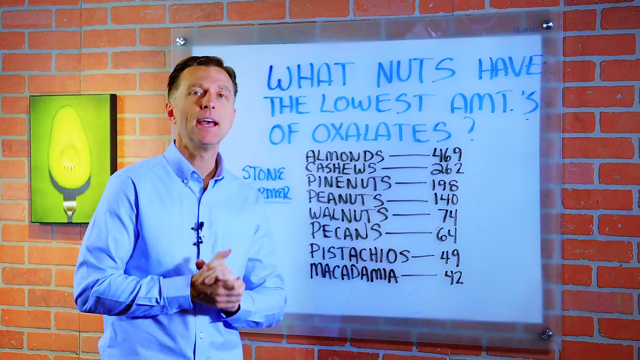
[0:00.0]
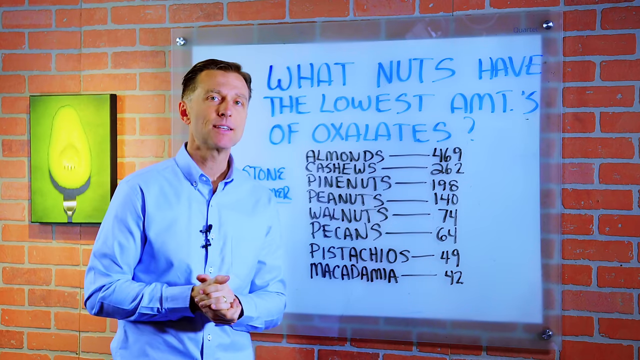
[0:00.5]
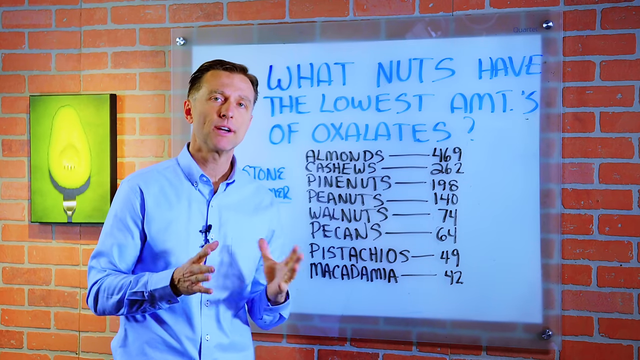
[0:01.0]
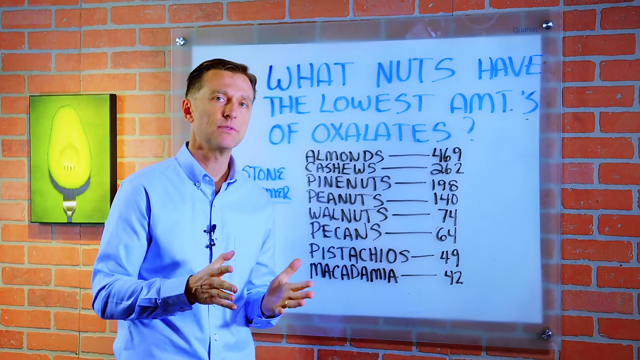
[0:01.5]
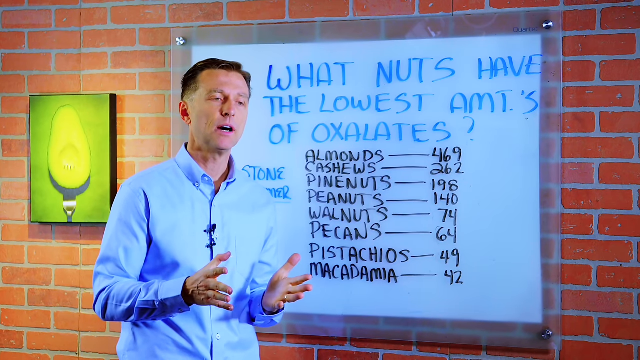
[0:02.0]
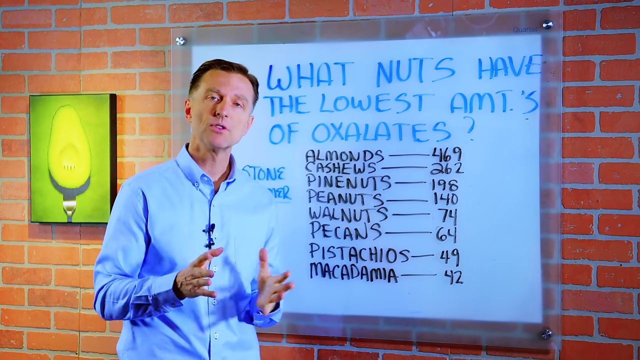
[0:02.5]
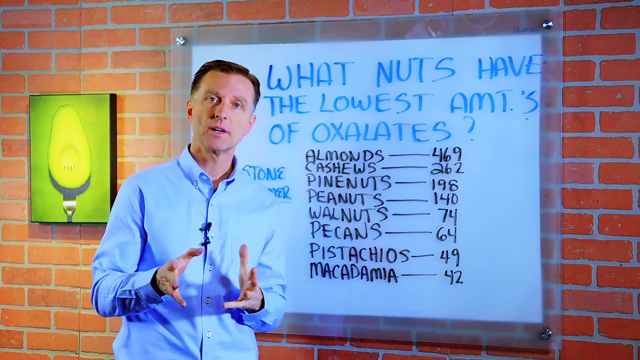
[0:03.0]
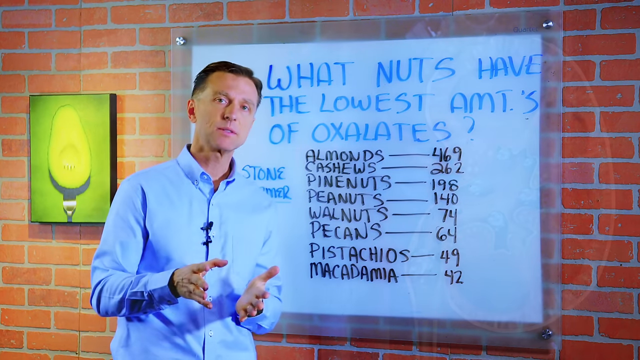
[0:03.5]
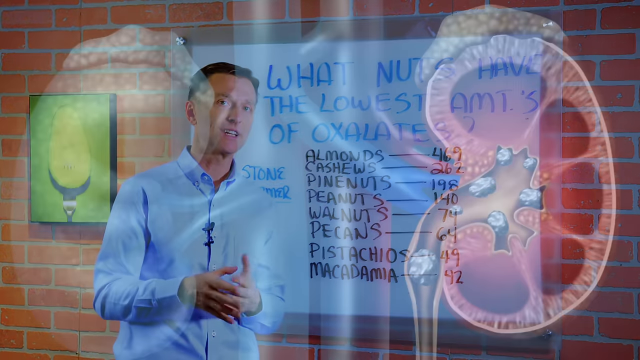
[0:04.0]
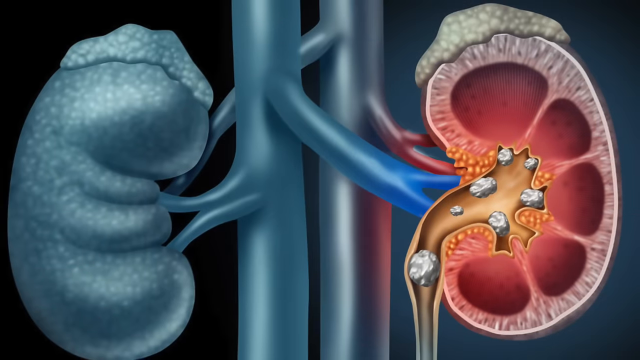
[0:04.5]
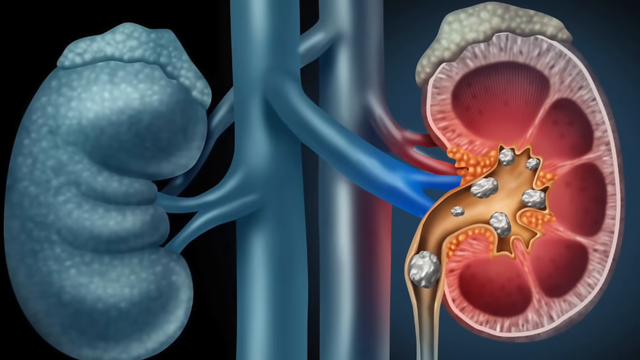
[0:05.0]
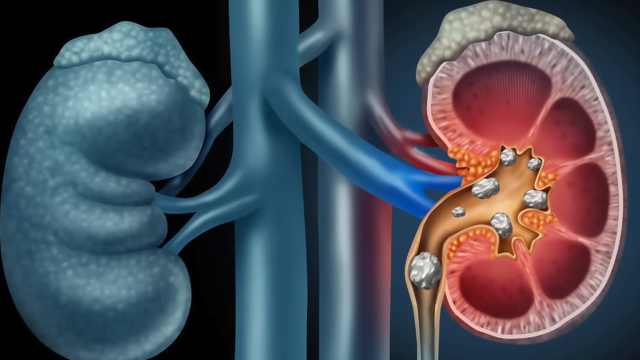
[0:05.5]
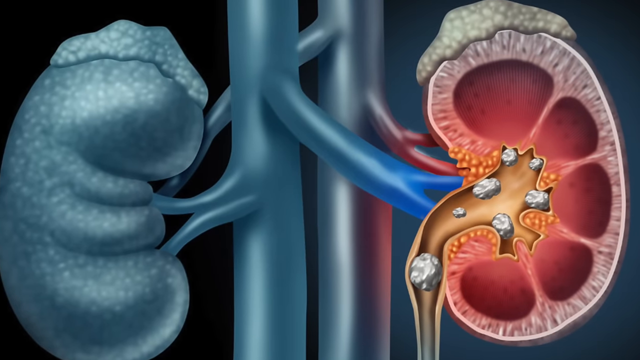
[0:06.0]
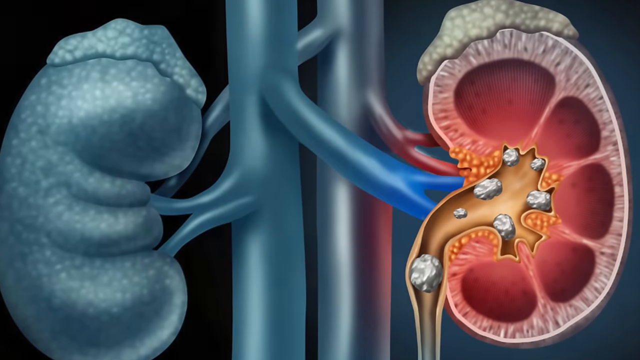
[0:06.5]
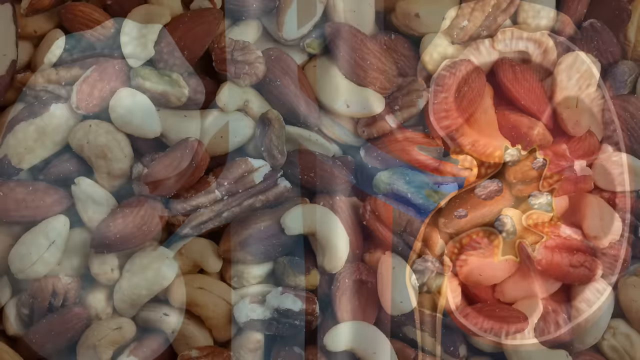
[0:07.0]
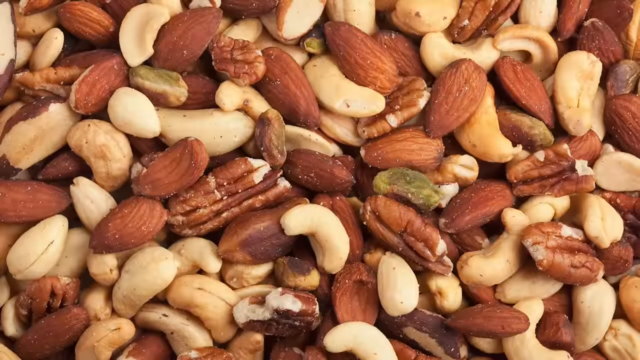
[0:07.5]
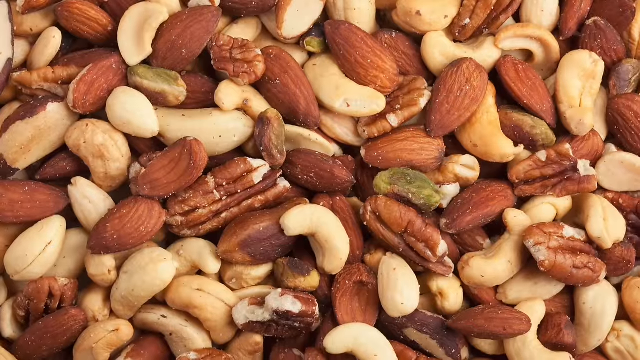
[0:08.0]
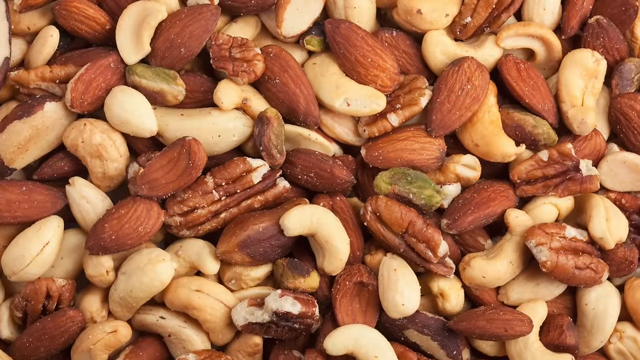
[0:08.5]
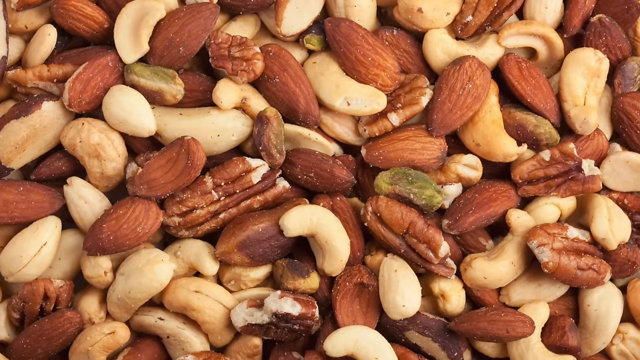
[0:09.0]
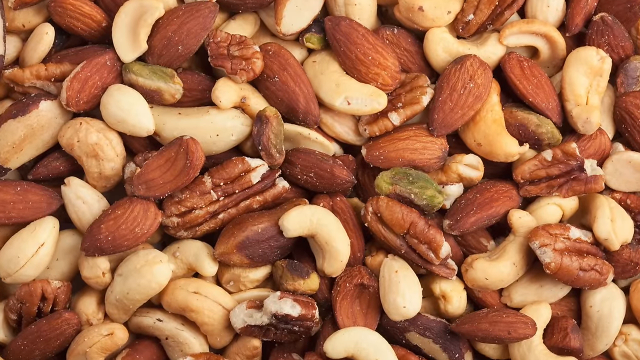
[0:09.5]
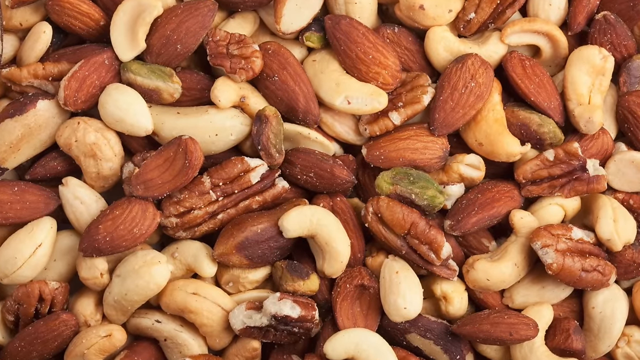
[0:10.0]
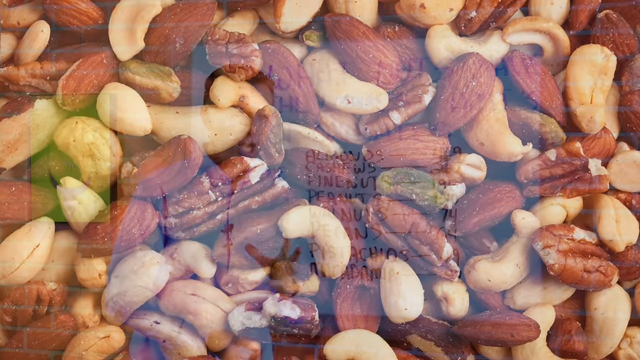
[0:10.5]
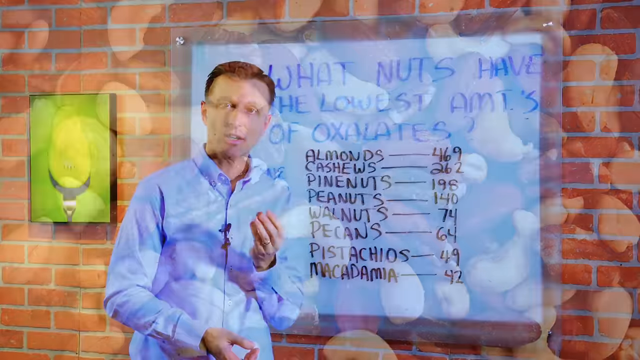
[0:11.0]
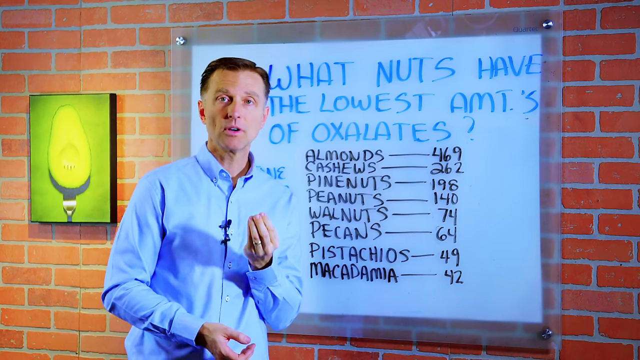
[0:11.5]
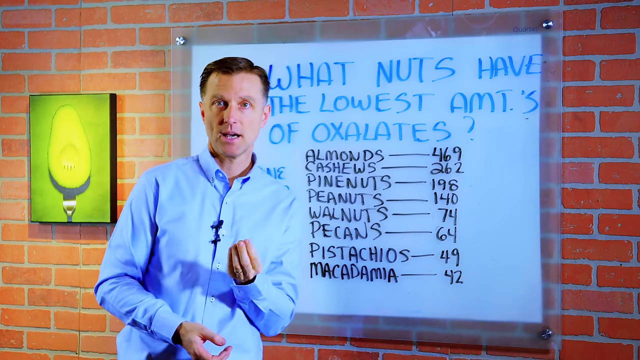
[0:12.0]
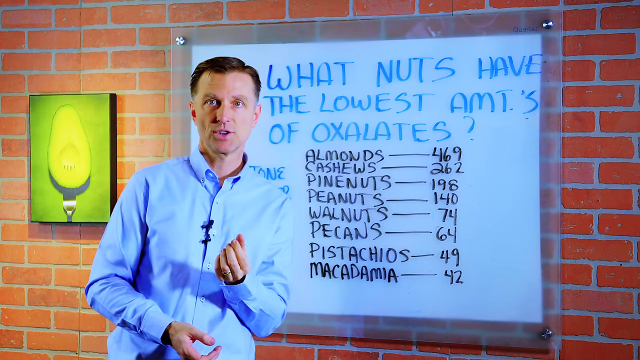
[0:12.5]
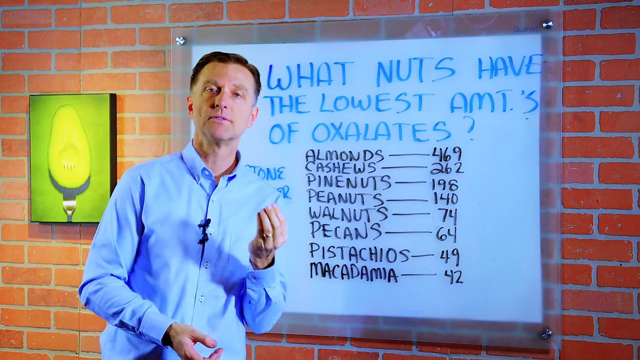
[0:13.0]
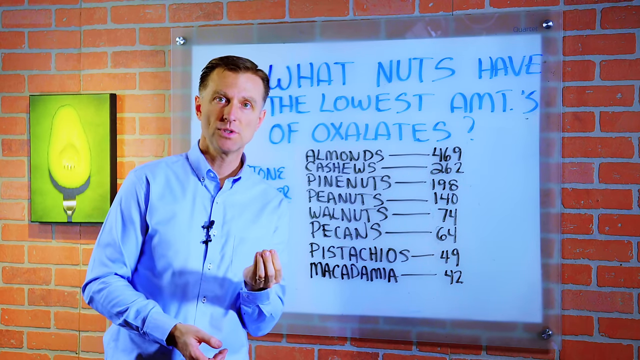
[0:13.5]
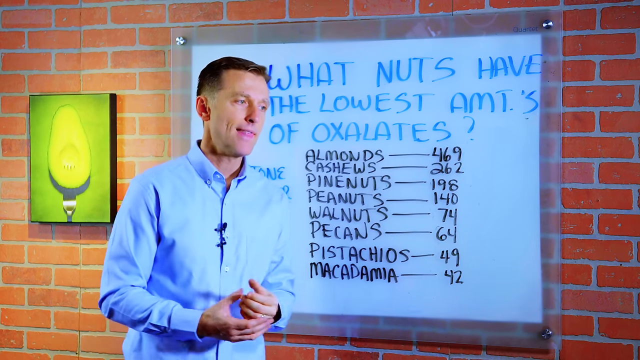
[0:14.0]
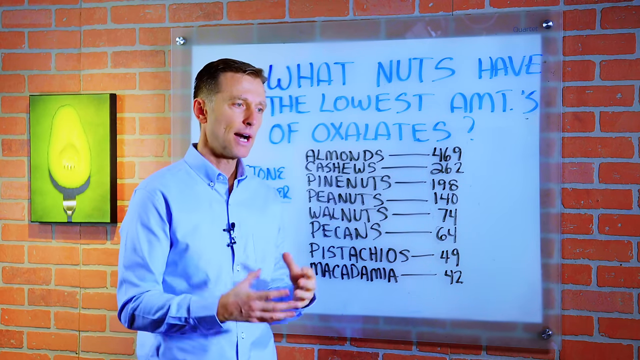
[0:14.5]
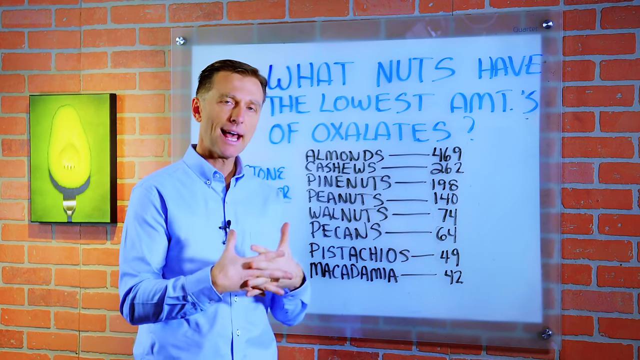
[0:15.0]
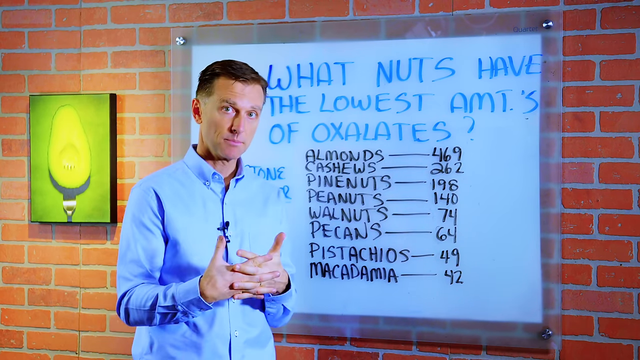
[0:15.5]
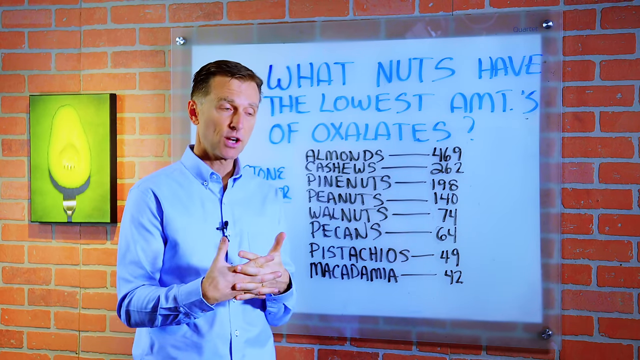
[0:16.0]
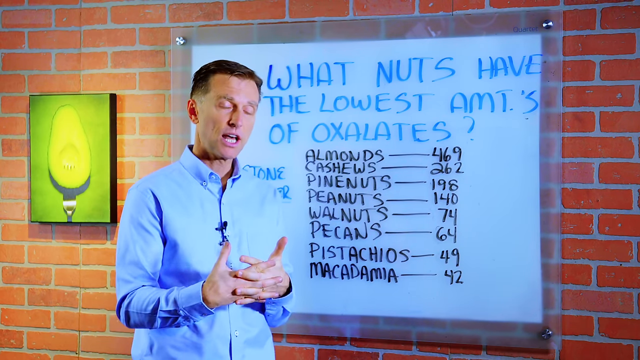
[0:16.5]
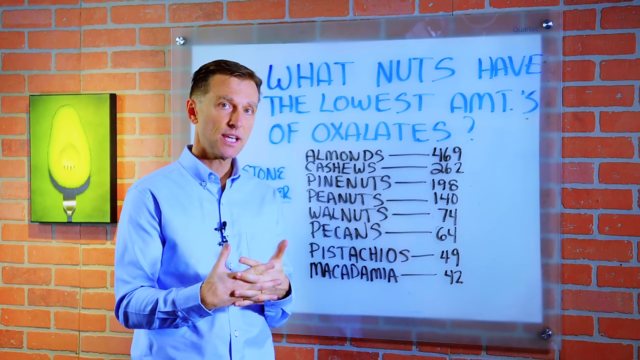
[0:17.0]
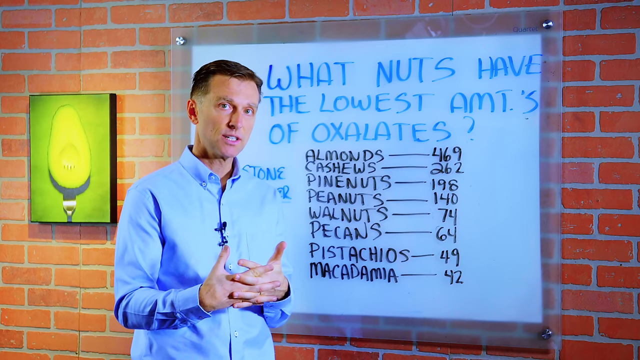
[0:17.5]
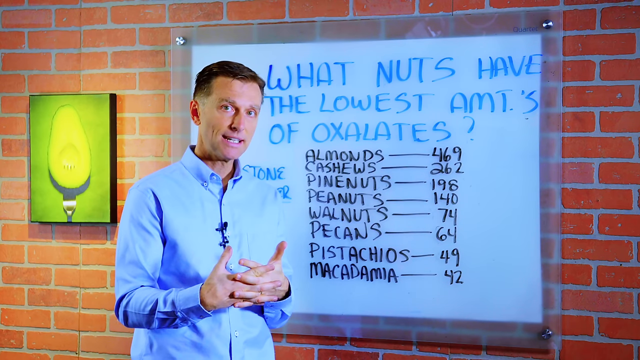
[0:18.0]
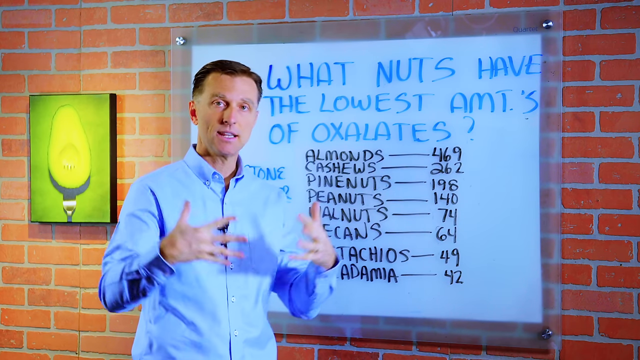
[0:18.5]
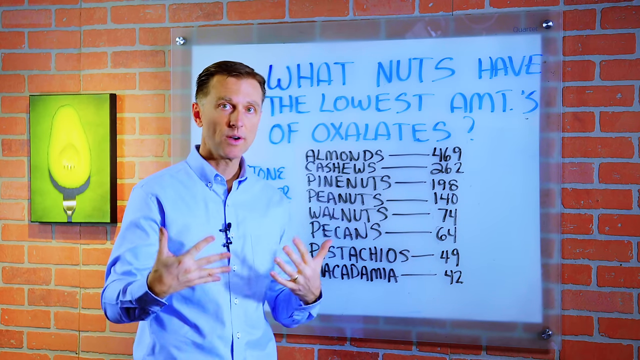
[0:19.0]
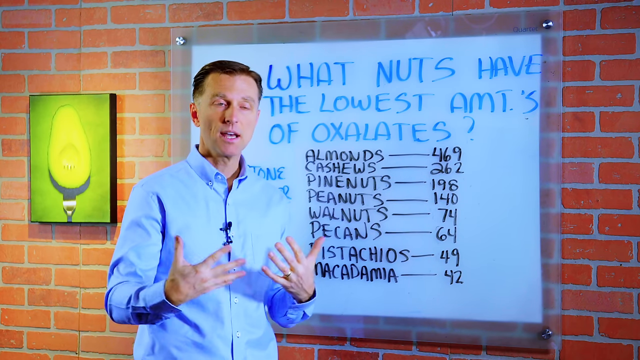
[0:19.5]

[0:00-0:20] A middle-aged man with brown hair in a blue shirt appears with a list on screen of nuts with what are apparently the lowest amounts of oxalates. An animation of what seems to be a heart appears. The list reads: almonds 469, cashews 262, pine nuts 198, peanuts 140, walnuts 74, pecans 64, pistachios 49, macadamia 42. The chart is hung on a bright red brick wall, and over to the left side there is an image of what might be an avocado.